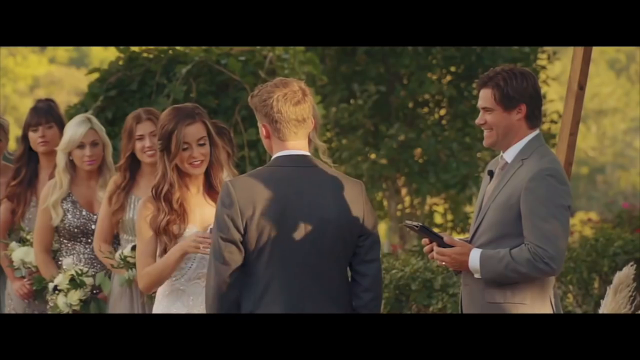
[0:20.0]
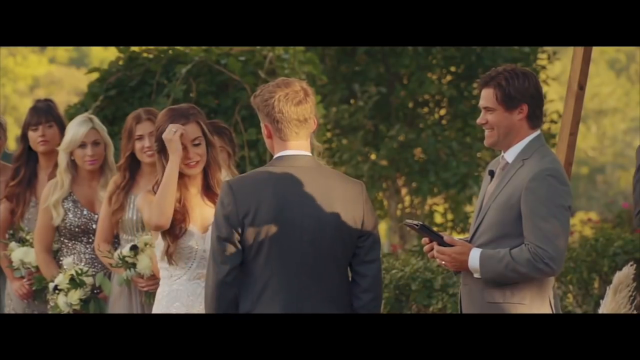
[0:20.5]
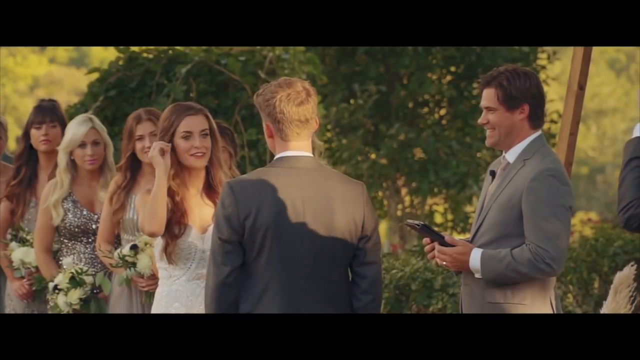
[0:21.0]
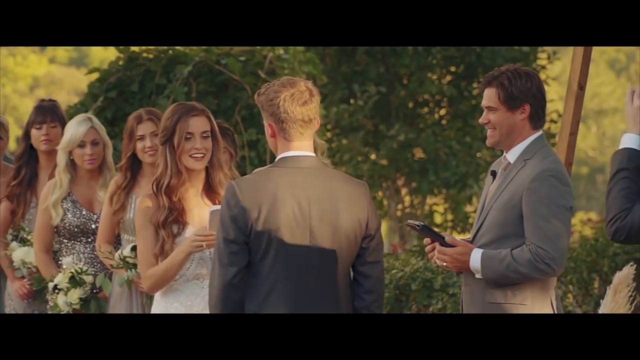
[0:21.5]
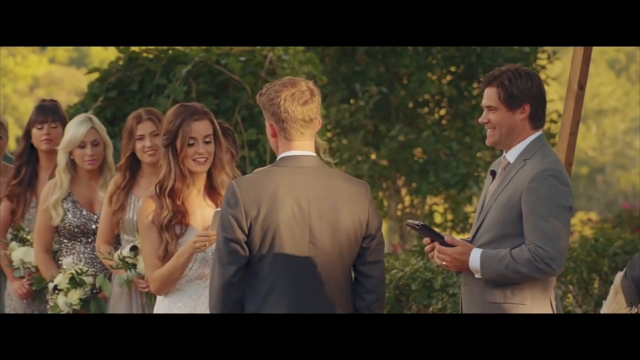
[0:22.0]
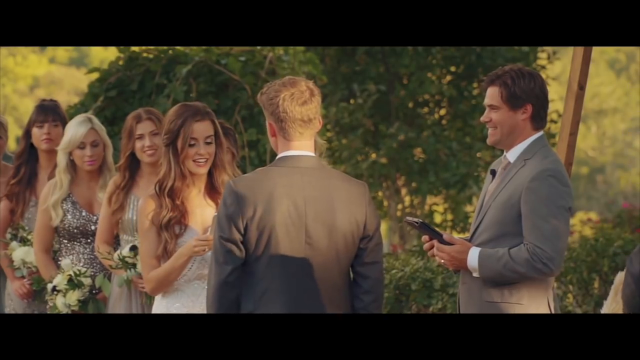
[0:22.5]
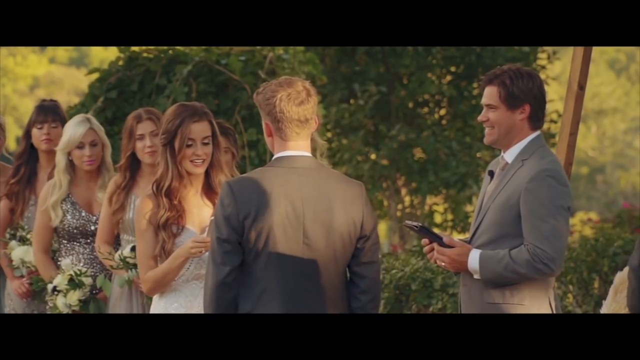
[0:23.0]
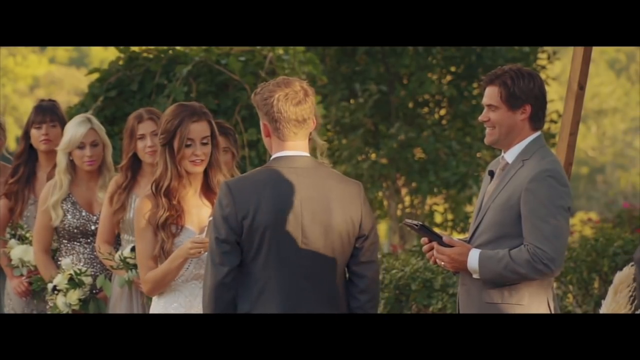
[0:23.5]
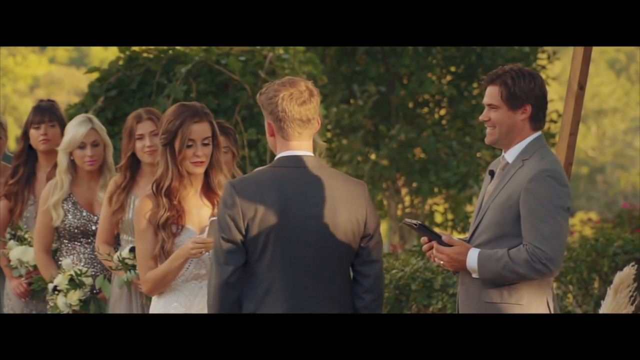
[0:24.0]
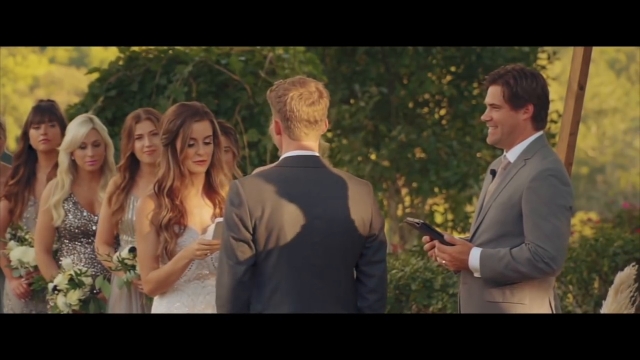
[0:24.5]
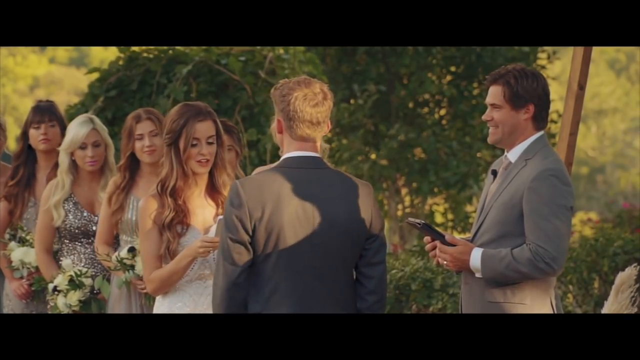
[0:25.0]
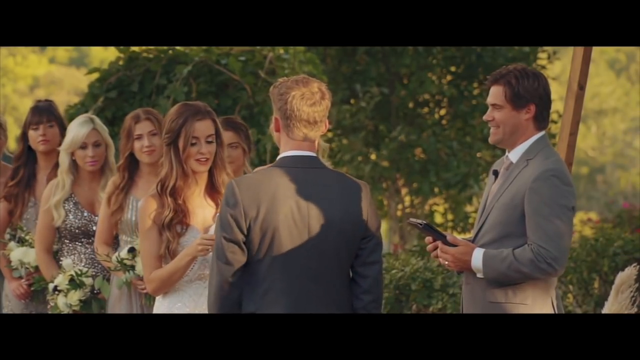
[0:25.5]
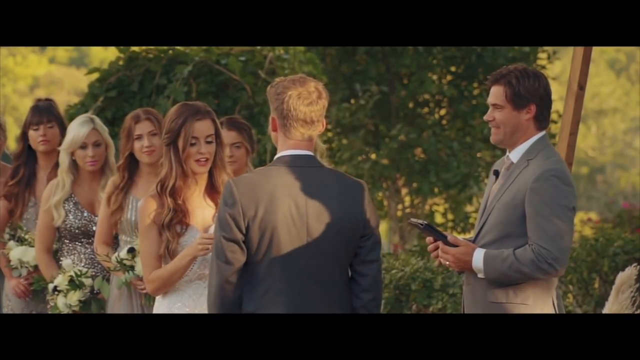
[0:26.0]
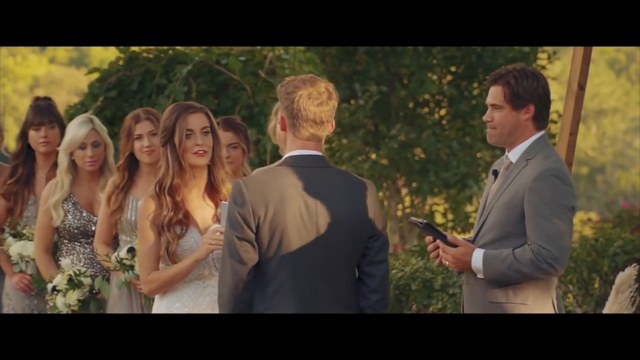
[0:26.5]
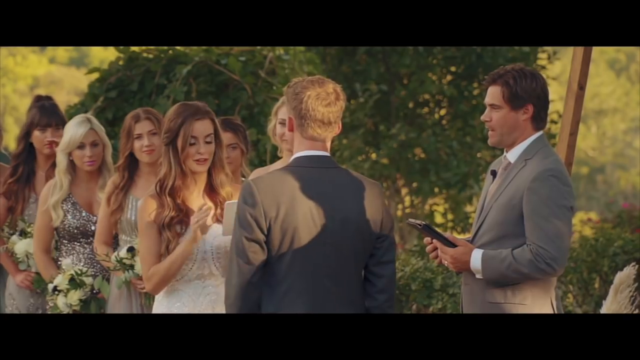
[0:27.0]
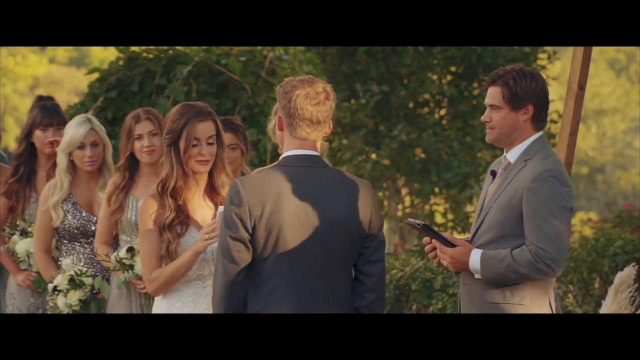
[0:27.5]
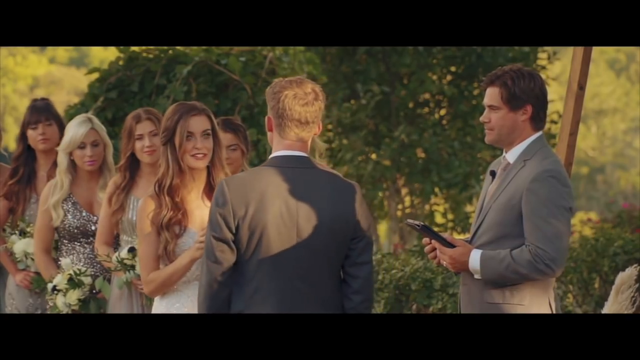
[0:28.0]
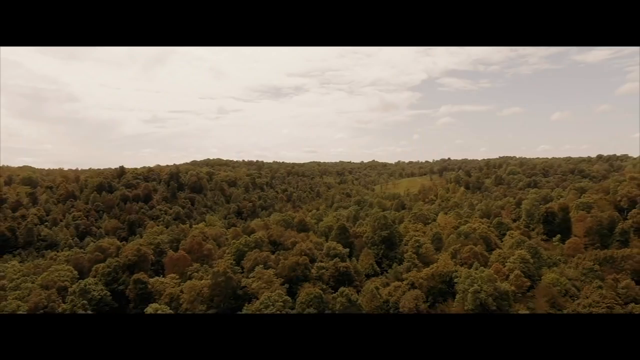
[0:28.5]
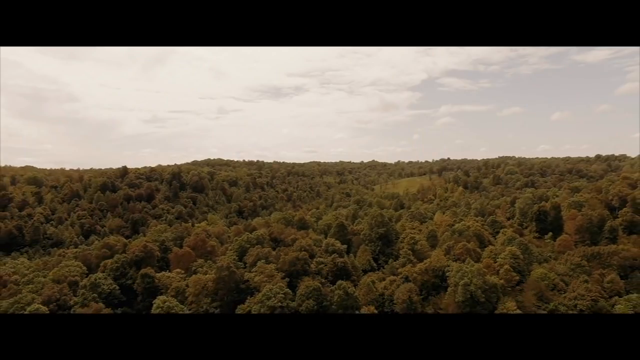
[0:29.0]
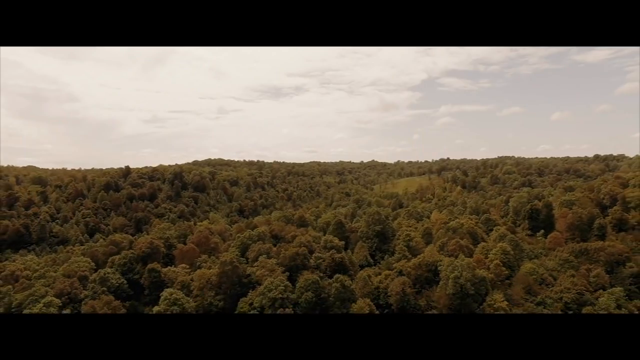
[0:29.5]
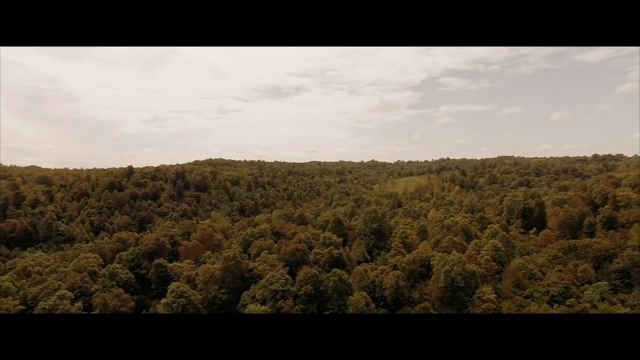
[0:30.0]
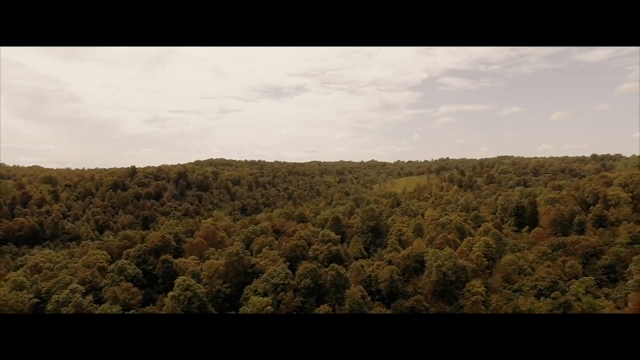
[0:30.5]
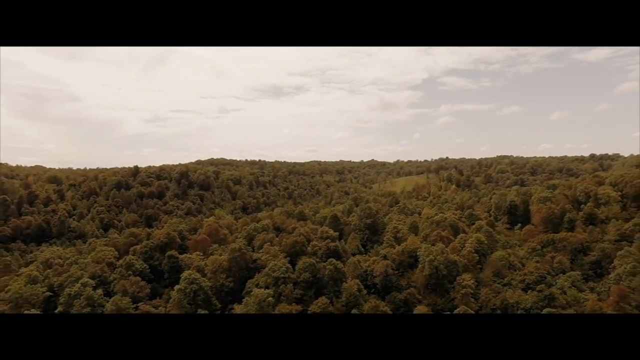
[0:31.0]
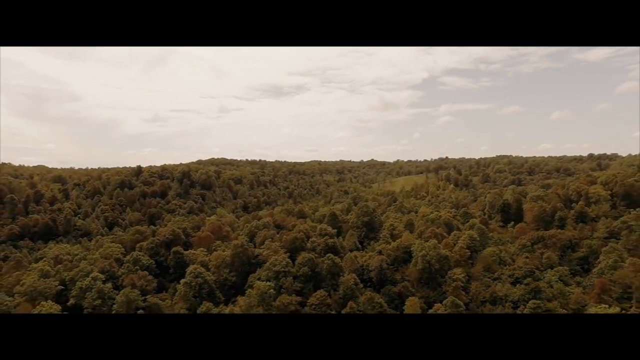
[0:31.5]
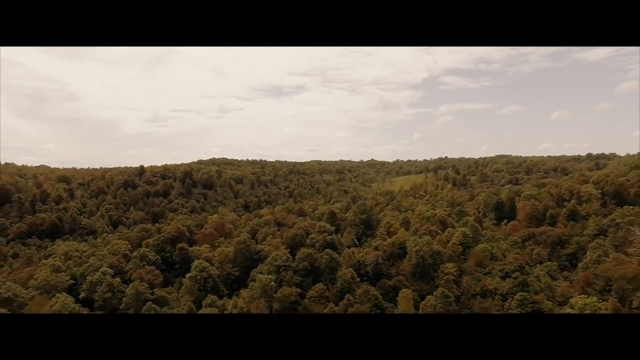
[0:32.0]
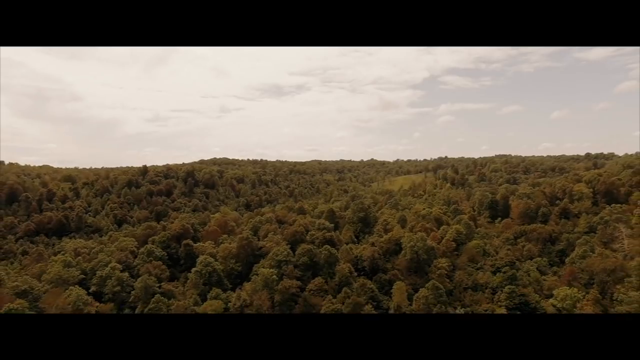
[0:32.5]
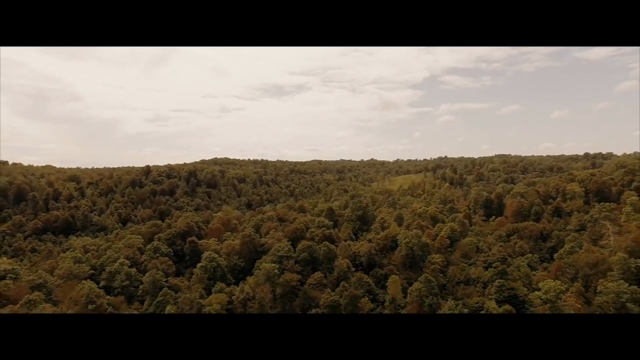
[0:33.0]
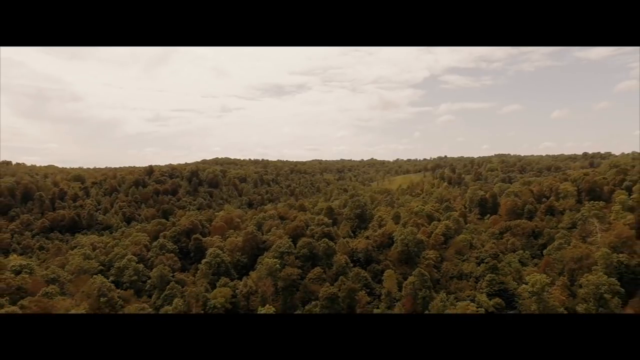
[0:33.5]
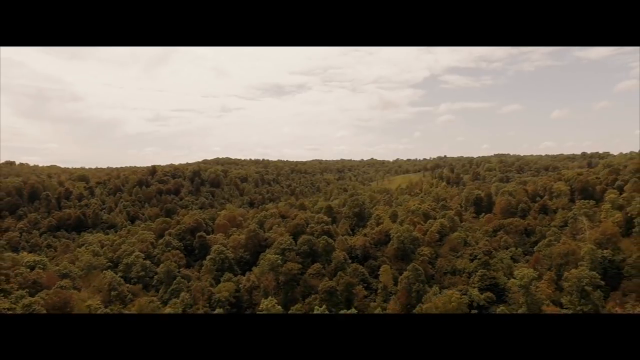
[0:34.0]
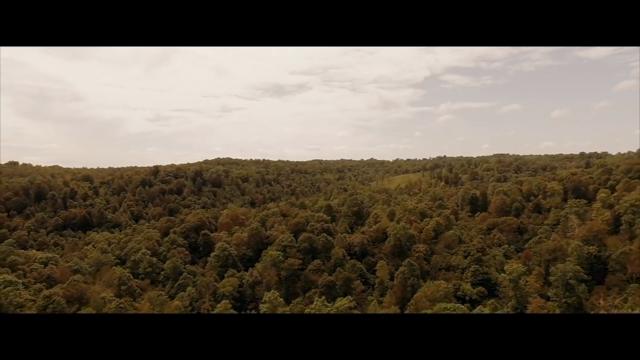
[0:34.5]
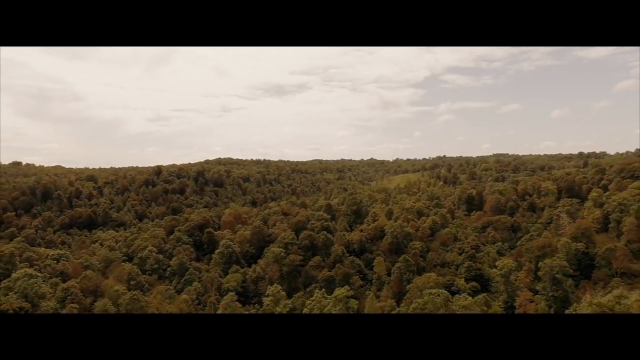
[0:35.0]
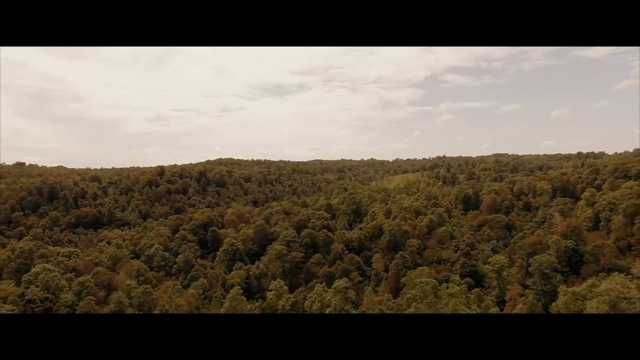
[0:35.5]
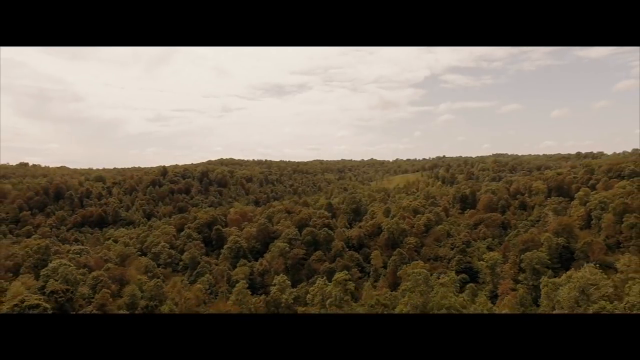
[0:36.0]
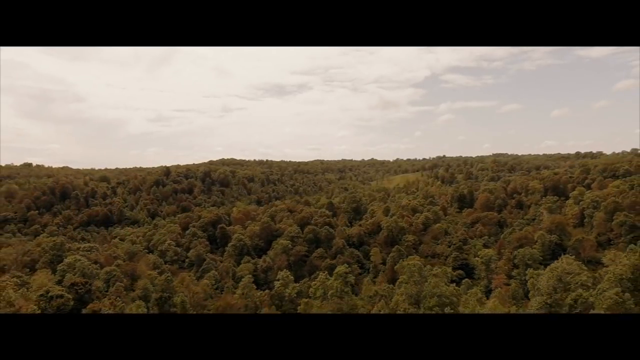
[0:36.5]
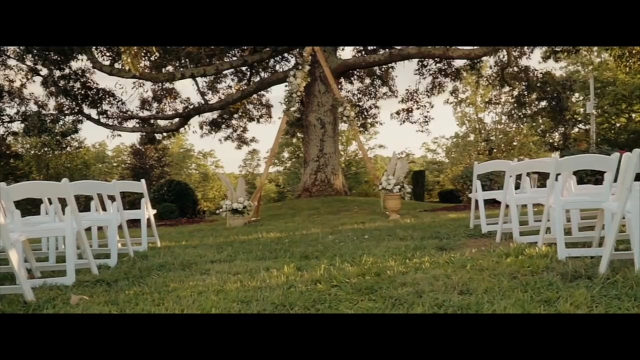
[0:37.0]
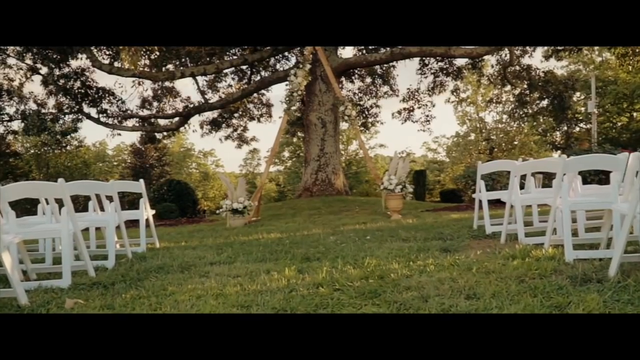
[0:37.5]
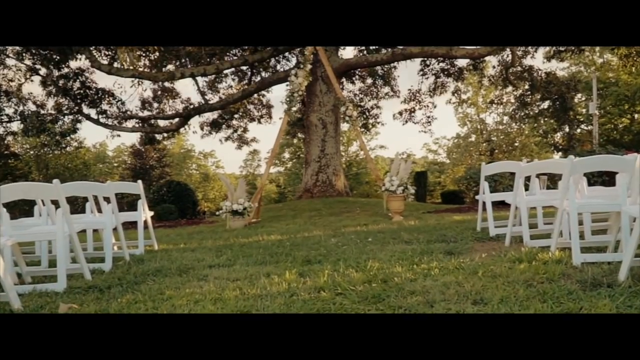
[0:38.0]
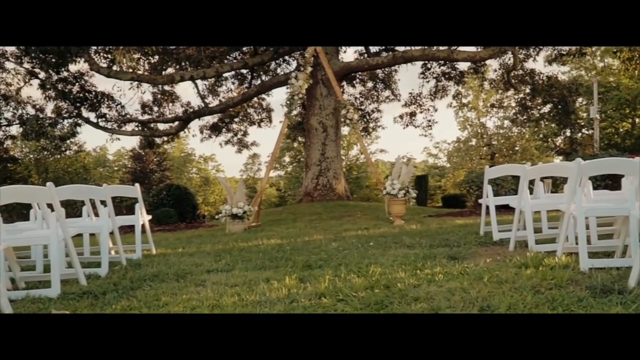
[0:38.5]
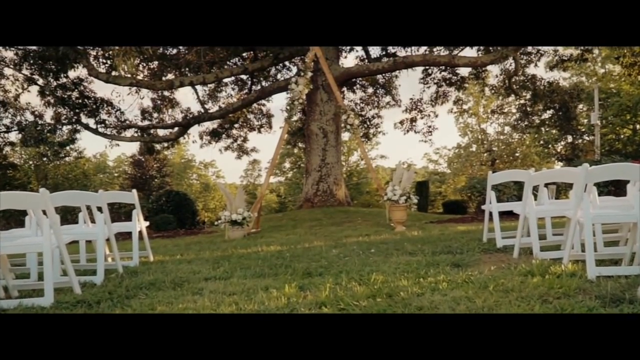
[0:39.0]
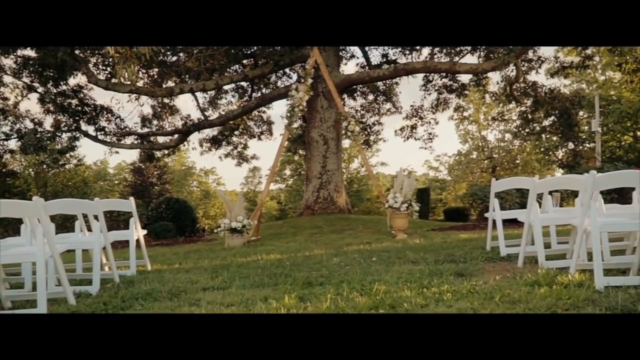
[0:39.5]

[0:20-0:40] What look like bridesmaids stand in a line wearing different dresses. One wears what looks like a golden striped dress; the one behind her wears what looks like a glittery dress and has brown hair and noticeable pink lip gloss. Another woman with brown hair is behind her, and two women in front of them have the same brown hair; the woman in front is the one getting married. A man has his hands in his pocket as the woman gives a speech. The pastor smiles as he holds an iPad in his hand, and another man on the right side of the screen seems to be the clergyman. A drone shot then shows the wedding venue with a lot of trees, followed by a shot of the altar with empty white chairs.